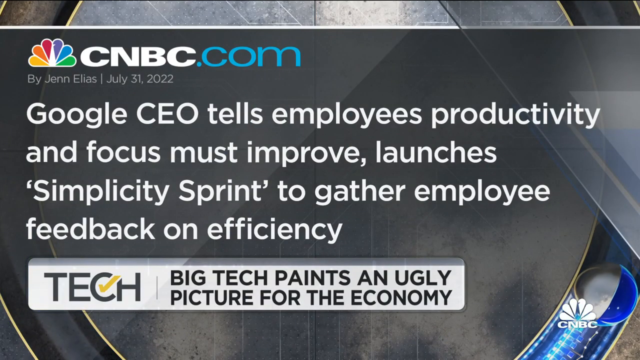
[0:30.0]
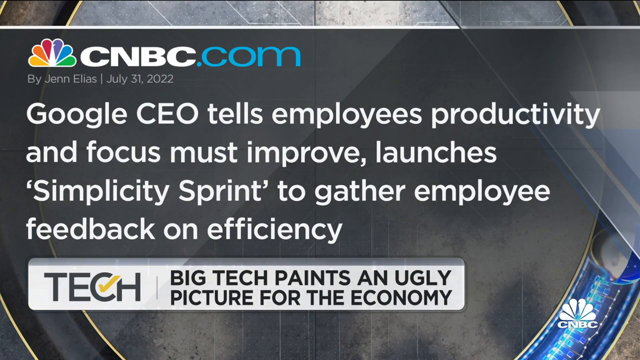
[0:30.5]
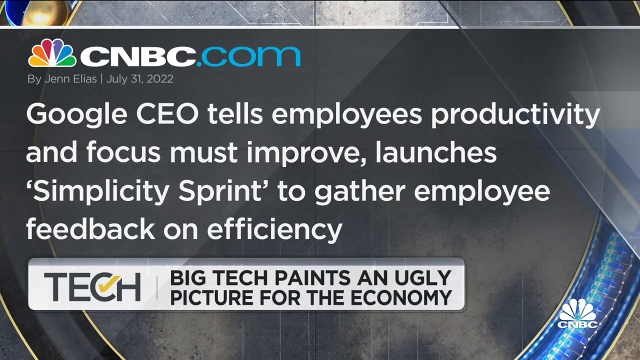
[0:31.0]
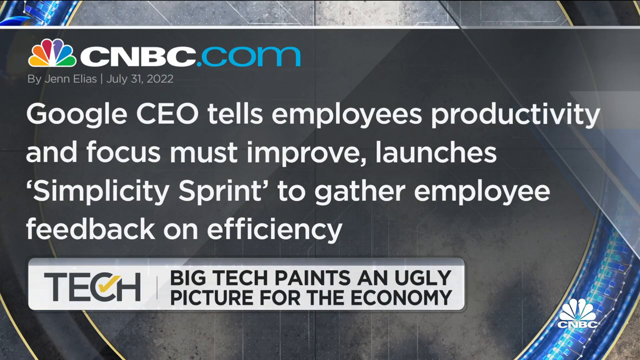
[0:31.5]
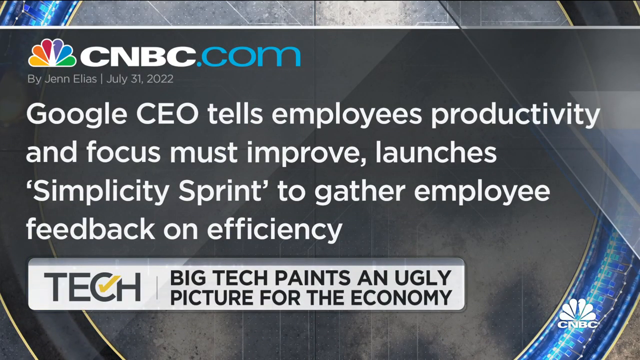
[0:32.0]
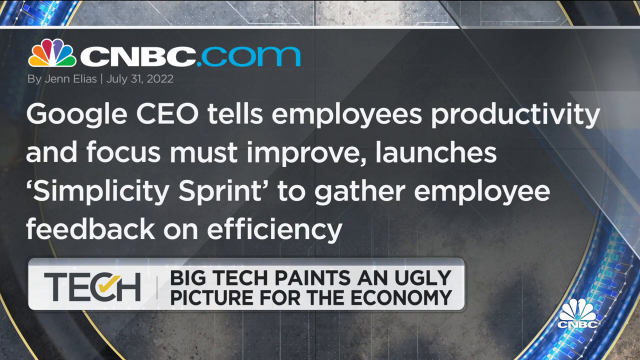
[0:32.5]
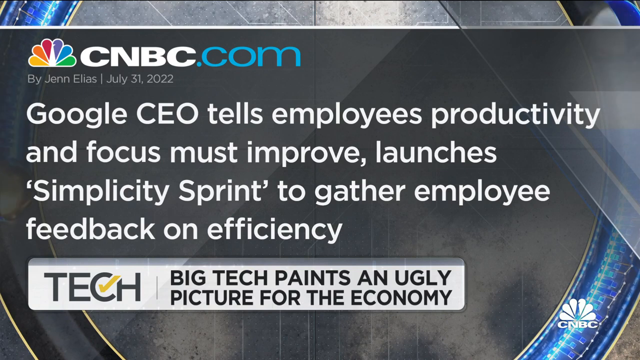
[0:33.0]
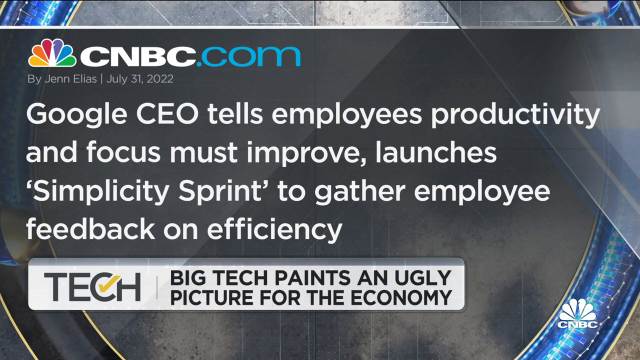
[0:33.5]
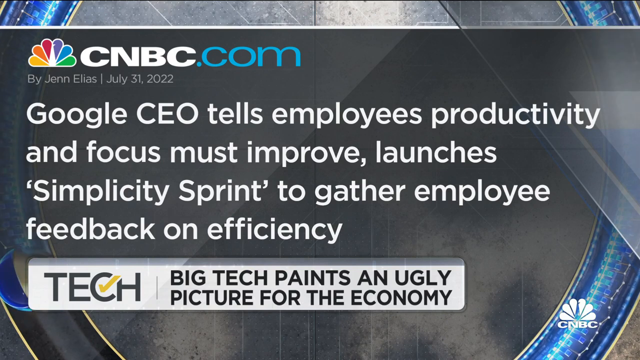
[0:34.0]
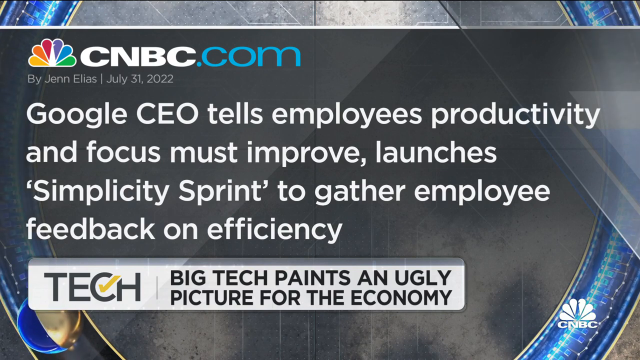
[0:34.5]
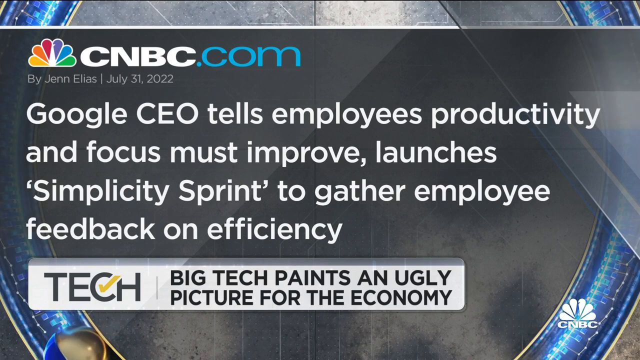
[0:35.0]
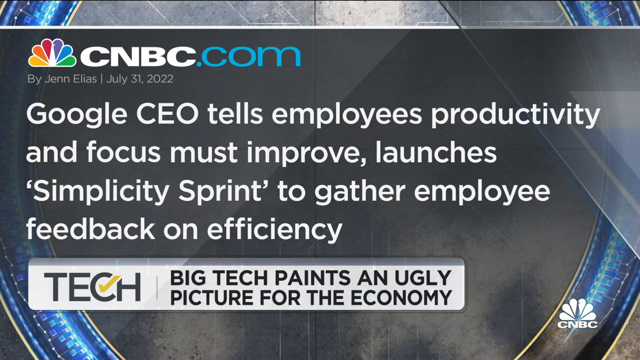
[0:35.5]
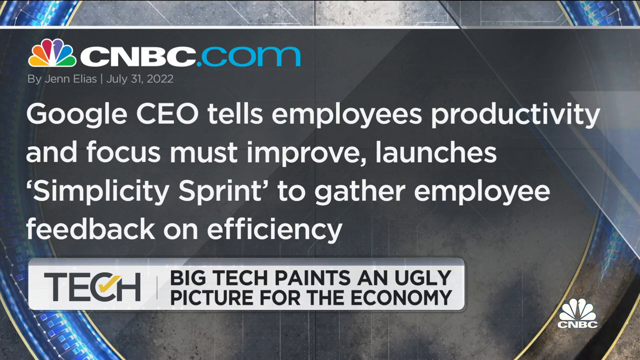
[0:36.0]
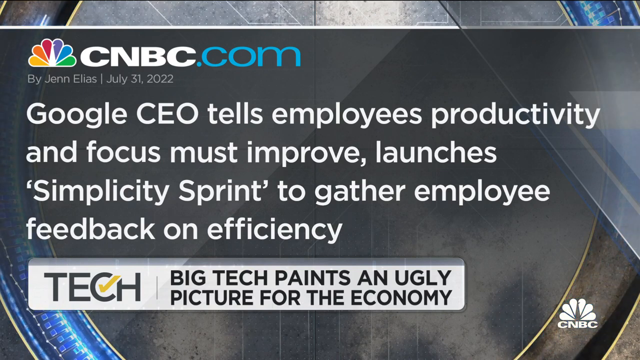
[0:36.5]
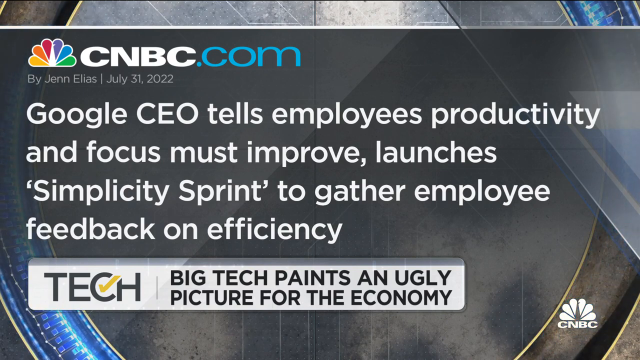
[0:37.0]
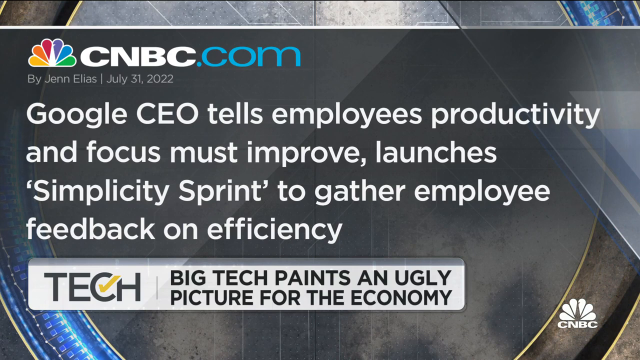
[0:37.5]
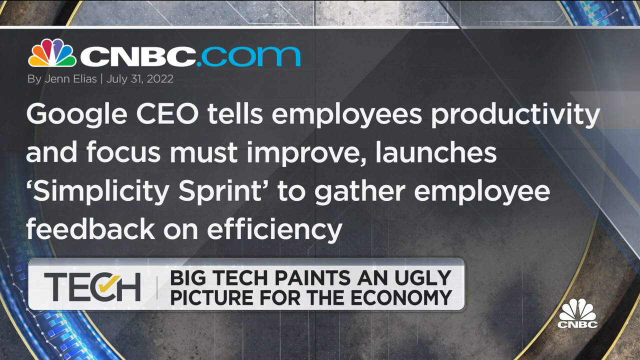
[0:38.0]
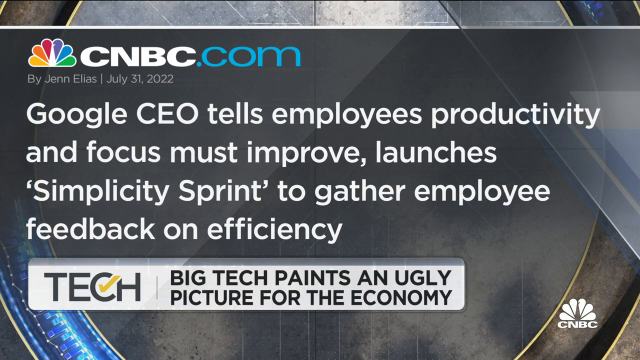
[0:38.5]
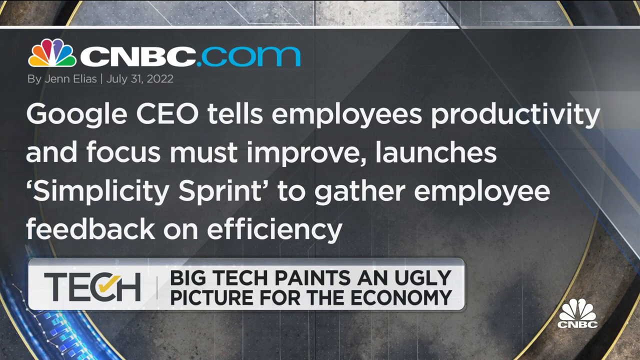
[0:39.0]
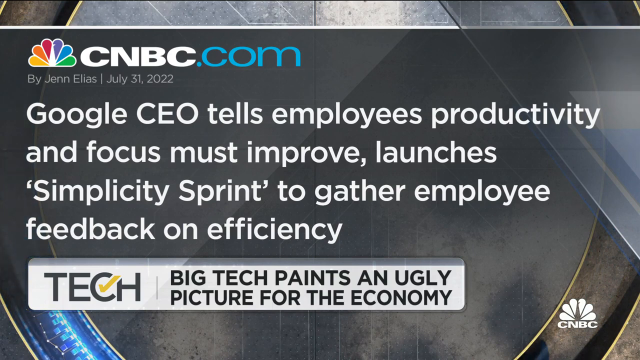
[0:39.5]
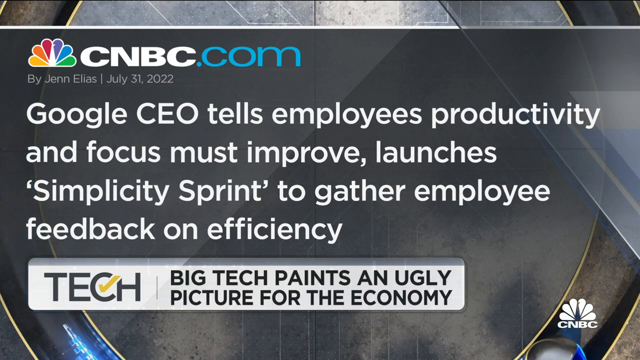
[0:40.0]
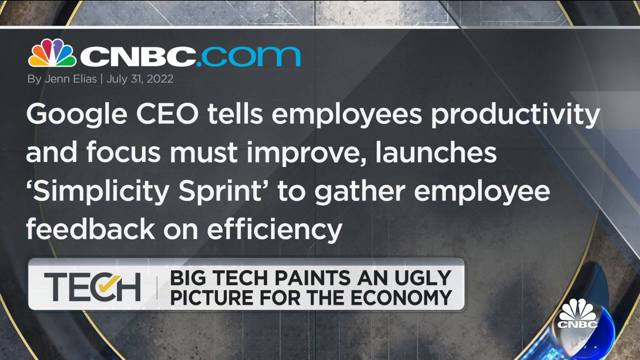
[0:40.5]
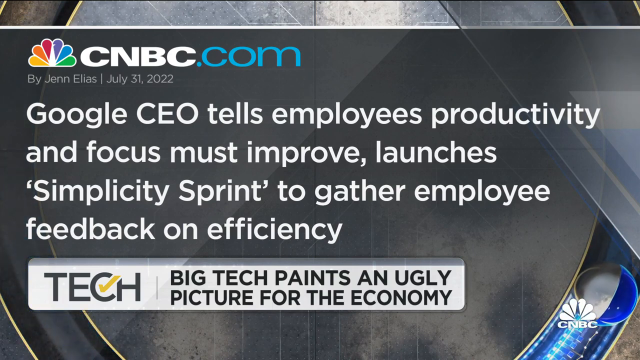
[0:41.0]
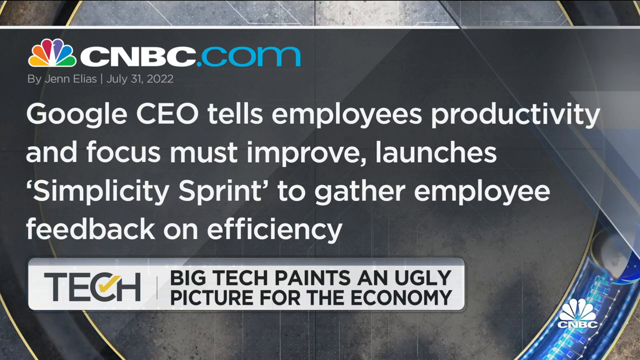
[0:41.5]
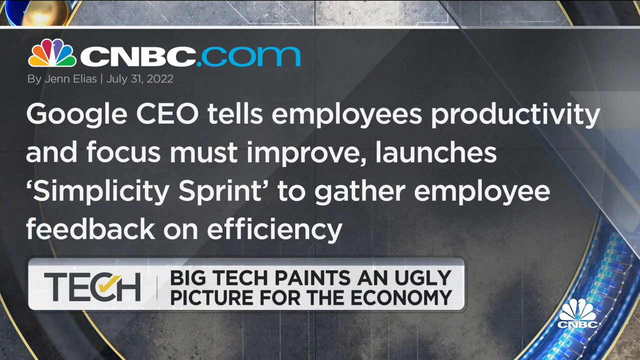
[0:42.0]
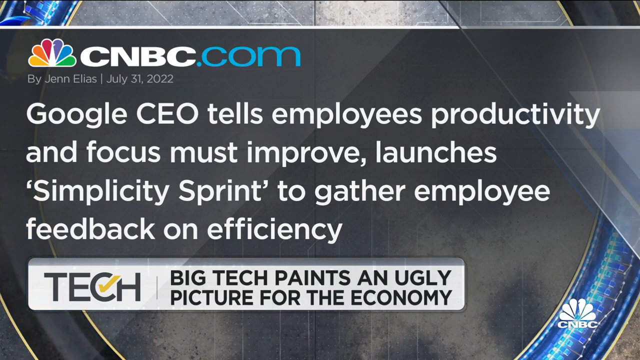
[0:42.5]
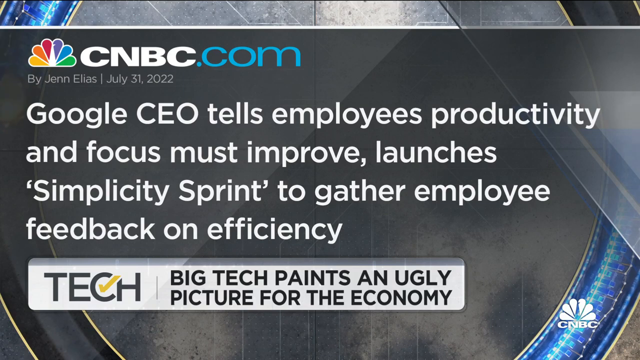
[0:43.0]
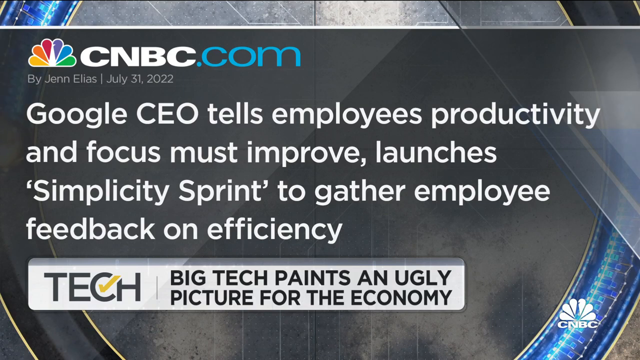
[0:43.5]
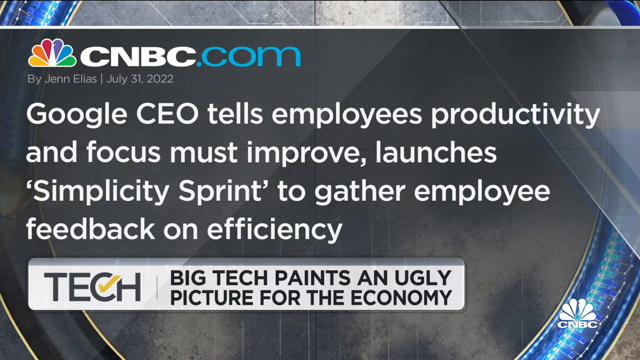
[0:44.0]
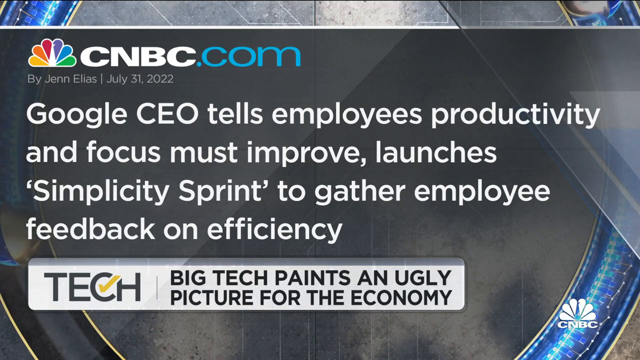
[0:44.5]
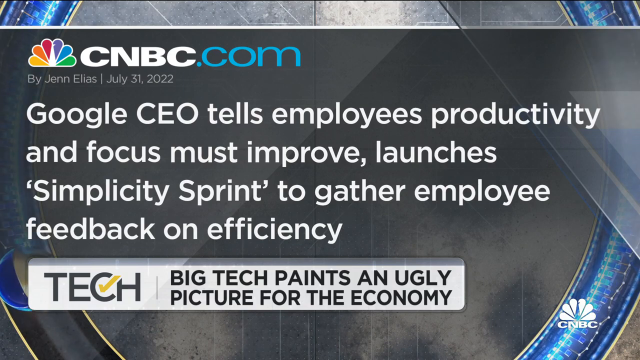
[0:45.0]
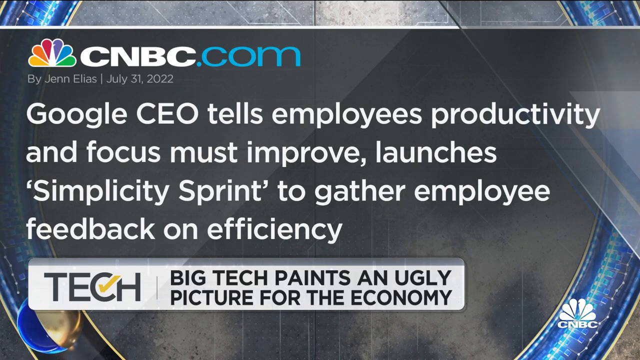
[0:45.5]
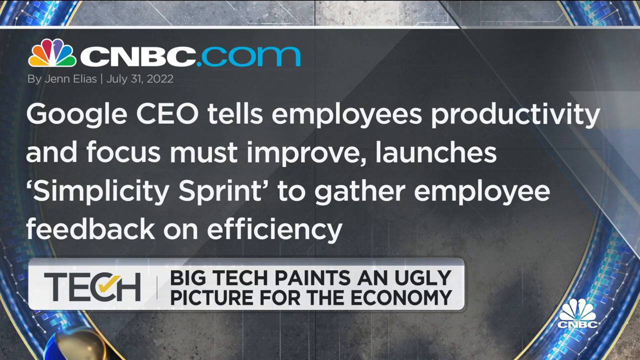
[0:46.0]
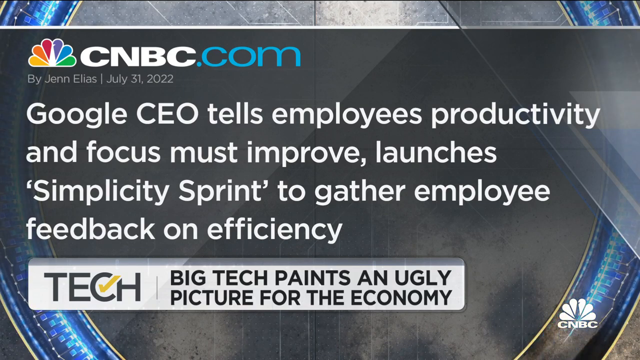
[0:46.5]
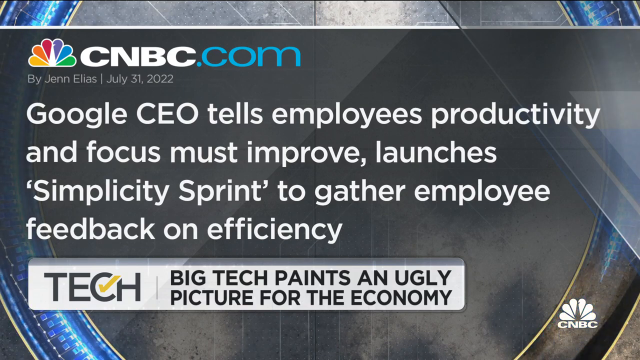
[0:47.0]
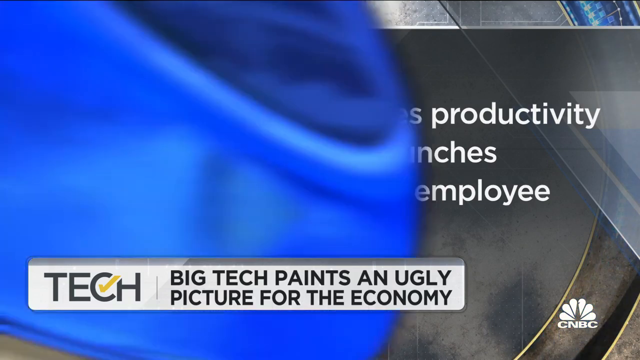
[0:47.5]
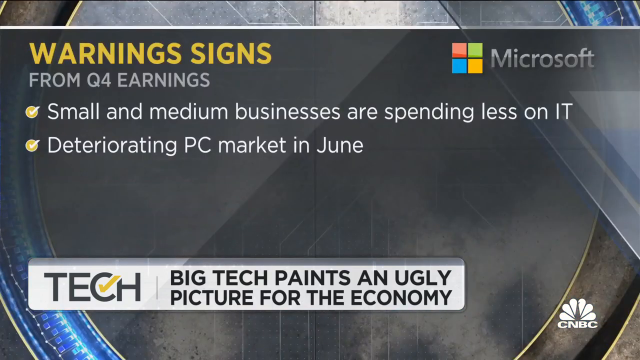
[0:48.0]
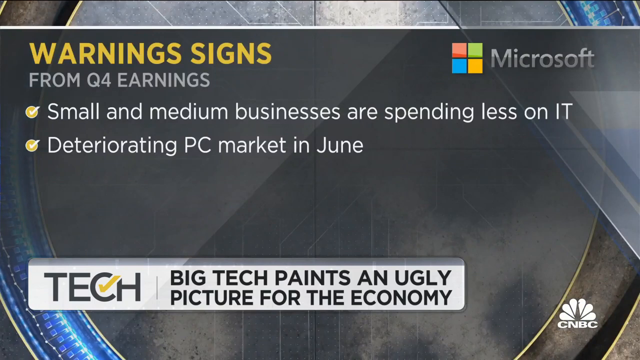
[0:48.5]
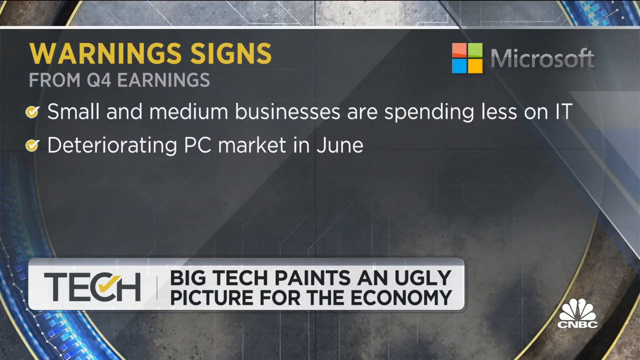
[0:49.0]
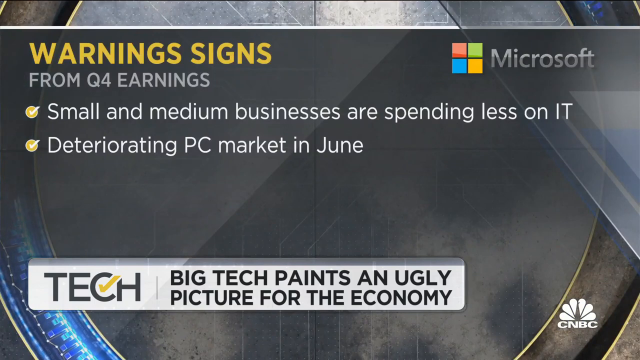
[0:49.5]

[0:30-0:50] The news story is from July 31st, 2022, by Jen Elias, information shown in the upper left-hand corner. The story is Big Tech Paints an Ugly Picture for the Economy. A quote from Google's CEO reads: "Google CEO tells employees productivity and focus must improve. Launches simplicity sprint to gather employee feedback on efficiency." The video then cuts to a slide that says "warning signs from quarter 4 earnings." The first warning sign is "small and medium businesses are spending less on IT," and the second is "deteriorating PC market in June."